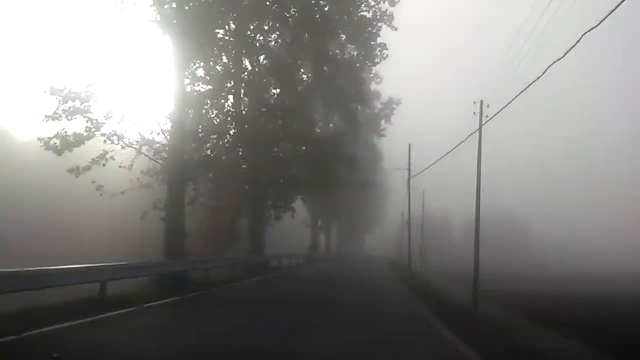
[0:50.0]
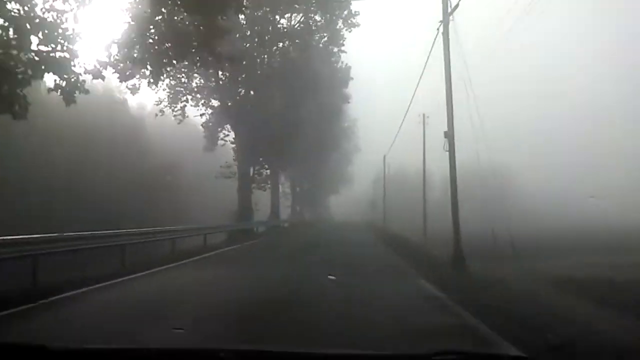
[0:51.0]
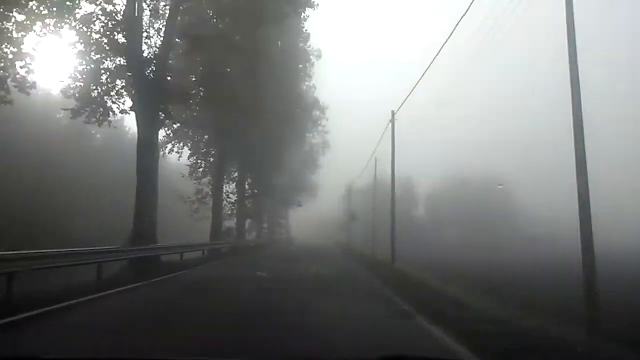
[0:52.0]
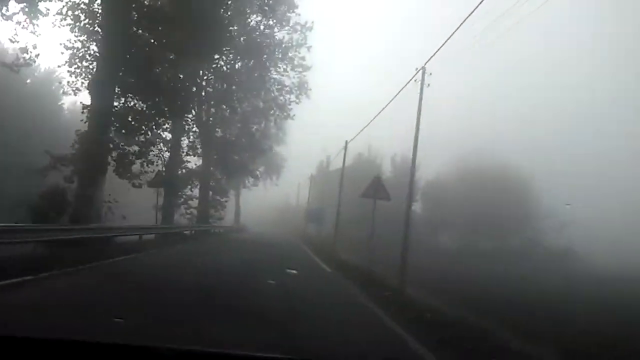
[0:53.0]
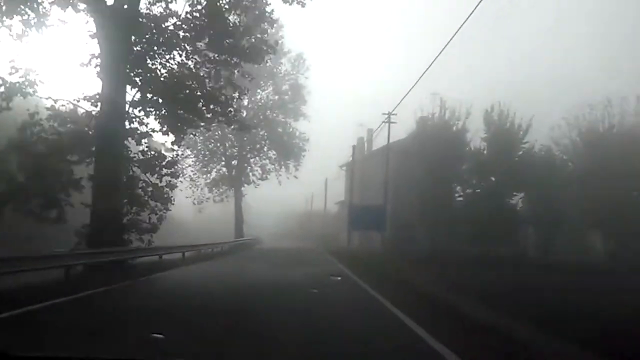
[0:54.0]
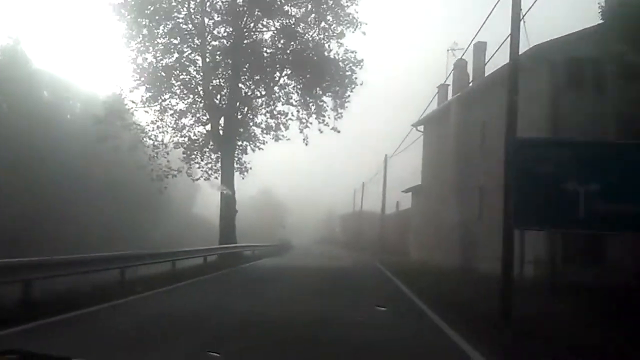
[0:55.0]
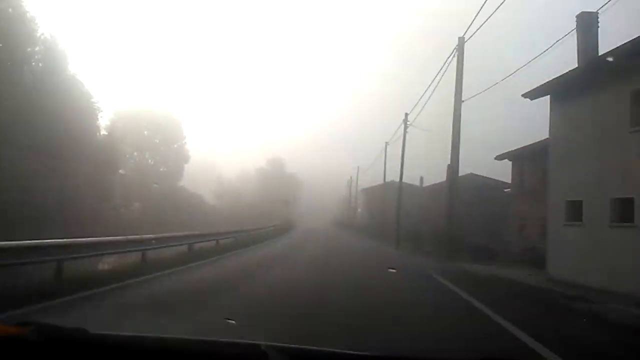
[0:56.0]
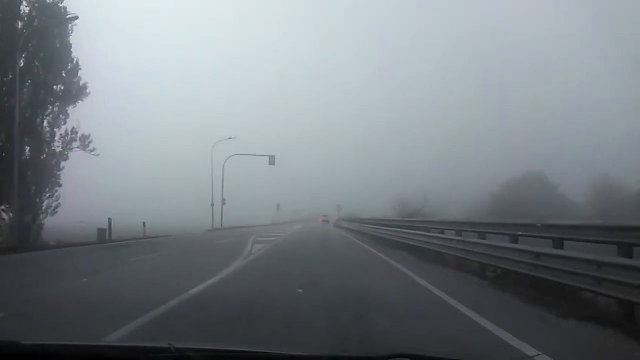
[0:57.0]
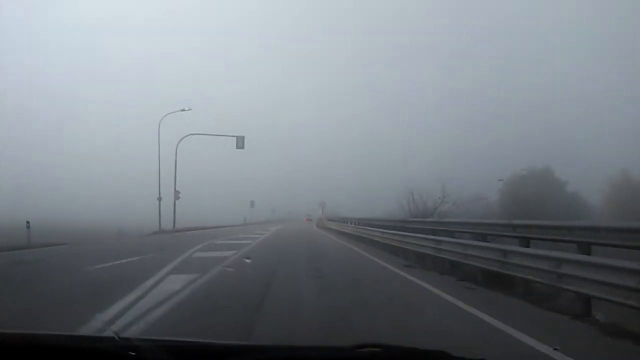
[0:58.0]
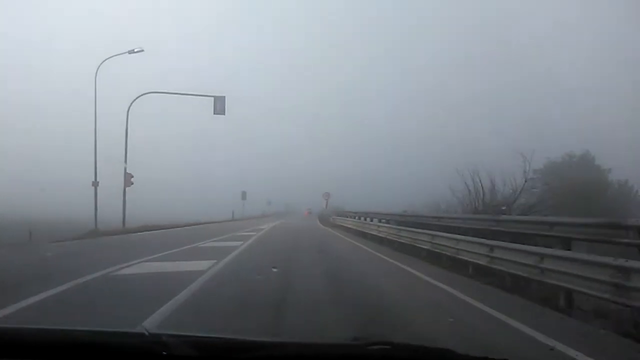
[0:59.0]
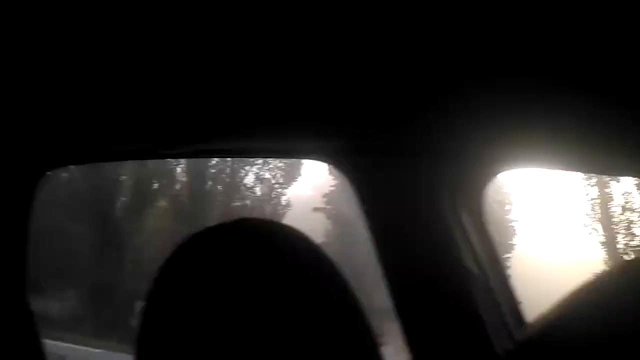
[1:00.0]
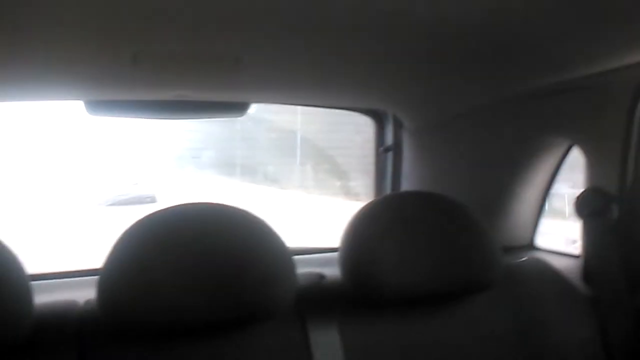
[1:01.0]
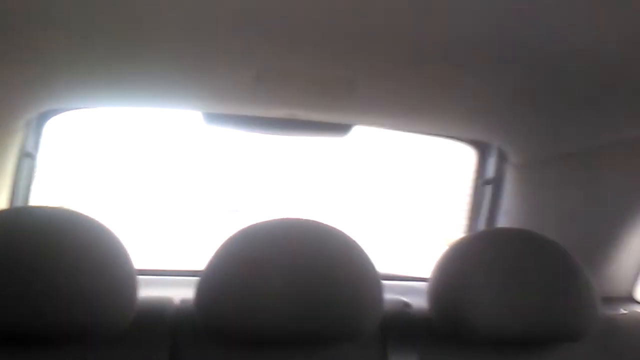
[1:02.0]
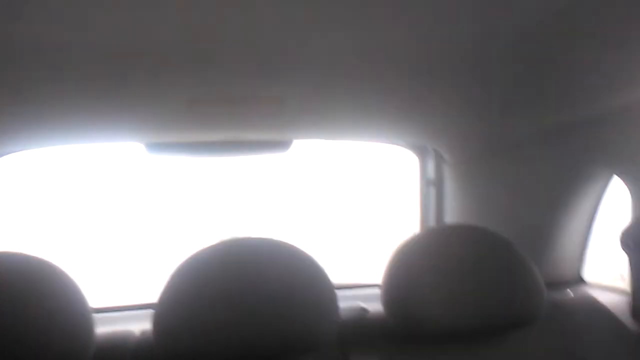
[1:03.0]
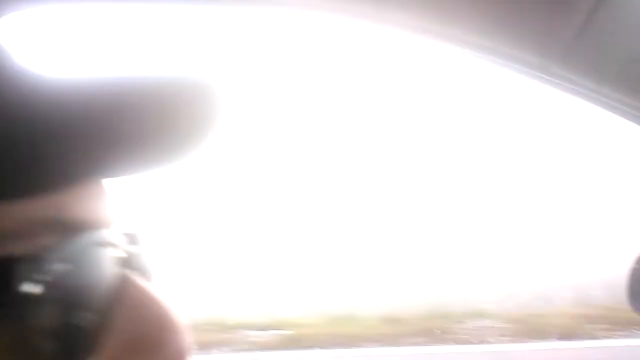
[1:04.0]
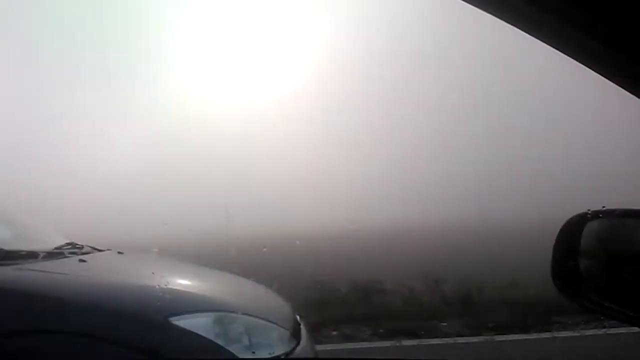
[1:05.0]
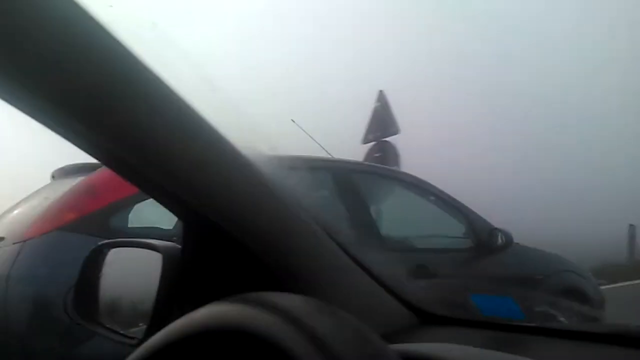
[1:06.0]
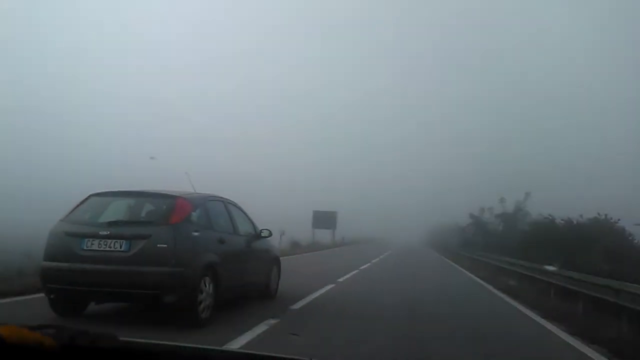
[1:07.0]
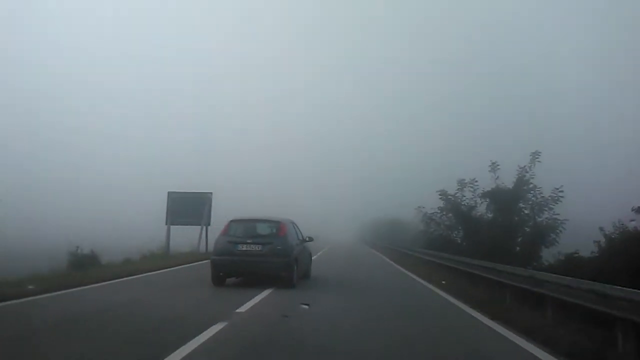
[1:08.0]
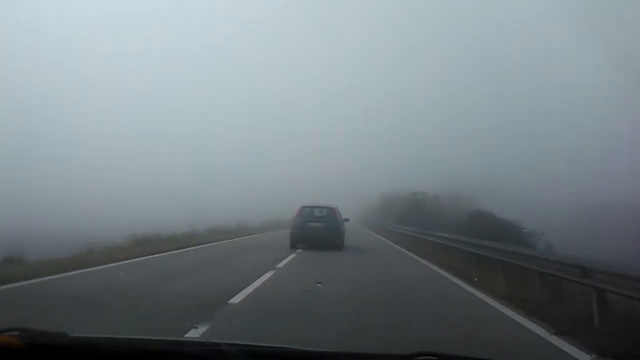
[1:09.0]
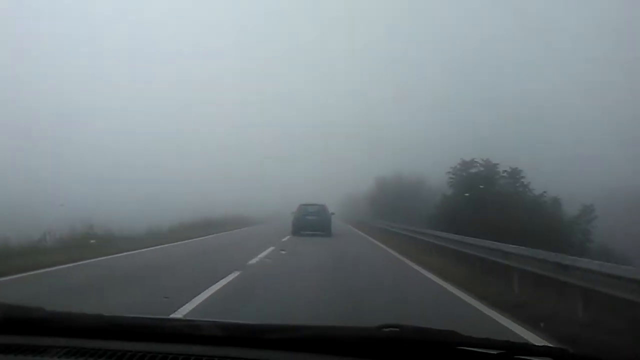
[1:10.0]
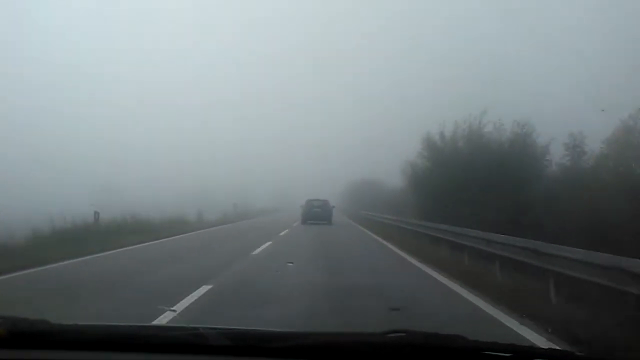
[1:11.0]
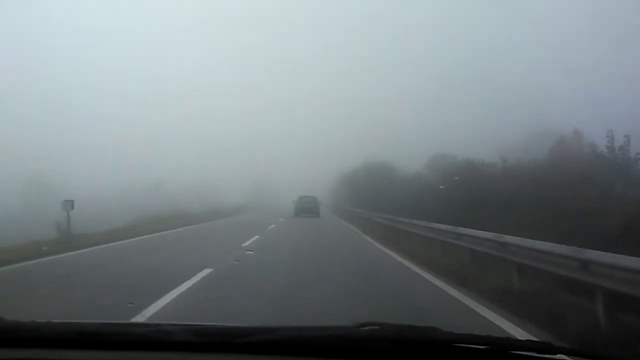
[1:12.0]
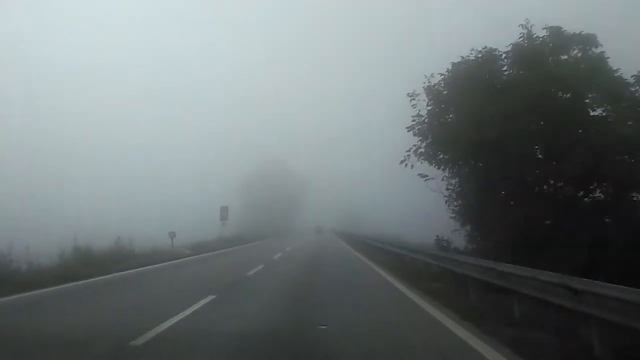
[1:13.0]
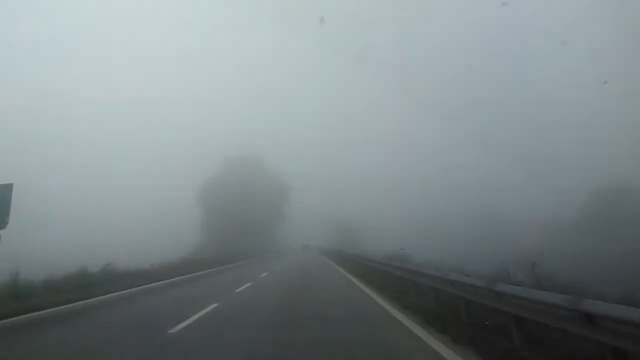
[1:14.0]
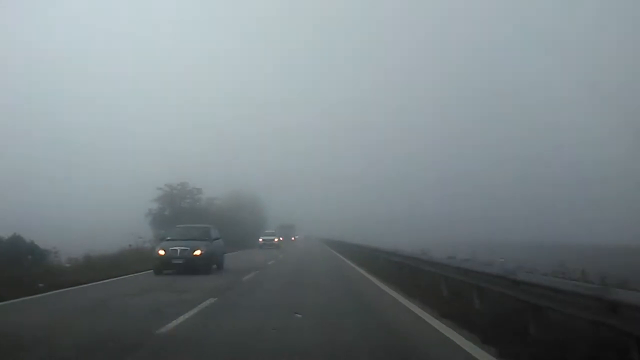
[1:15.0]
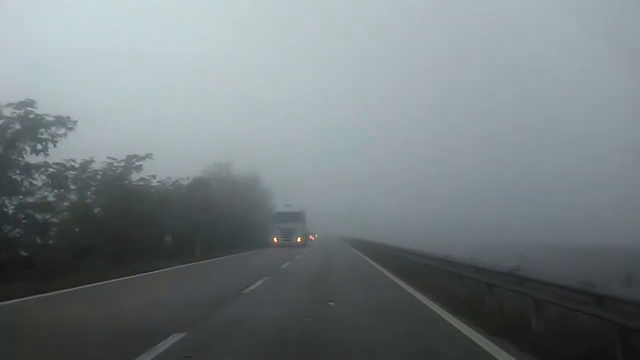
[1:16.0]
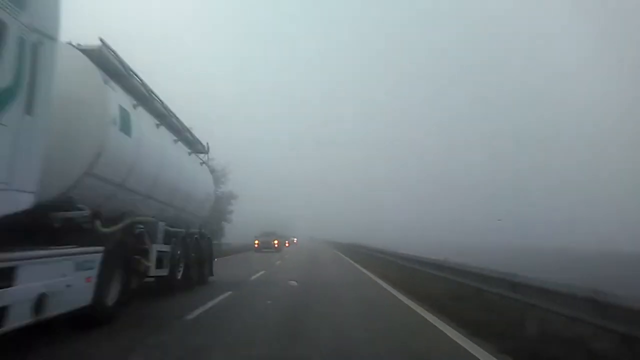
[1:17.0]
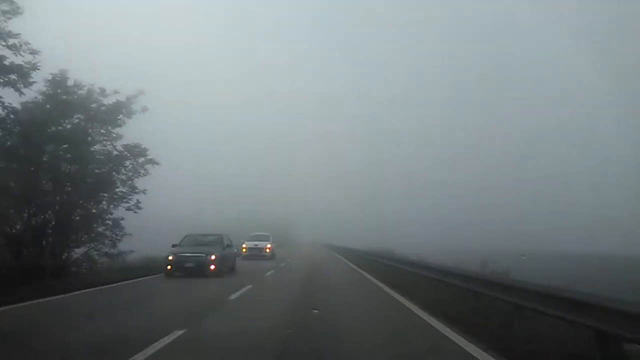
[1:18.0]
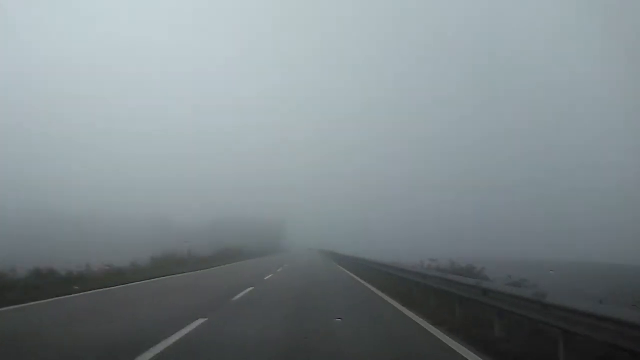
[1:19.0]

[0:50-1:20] A vehicle moves at a fairly fast pace down a foggy road. A lot of power lines are off to the right, on poles probably about 15 feet tall with horizontal lines. To the left are a guardrail and a bunch of trees probably a good 20 feet tall. The camera is a bit shaky, likely handheld. At one point it turns to the left, away from the windshield, and pans to the backseat, which is empty: three empty headrests, and beyond them the back windshield showing only kind of foggy daylight. The camera turns back to the front and catches a car passing on the left, which then merges into the lane in front of the filming car. Many vehicles on the road have their headlights on because it is very foggy. The vehicle is probably moving at maybe about 30 to 40 miles an hour, and it is maybe either early morning or late at night.